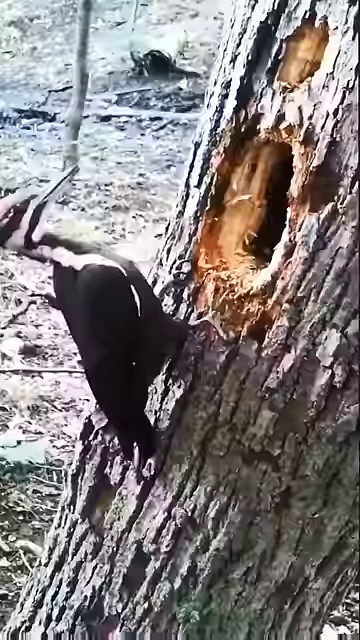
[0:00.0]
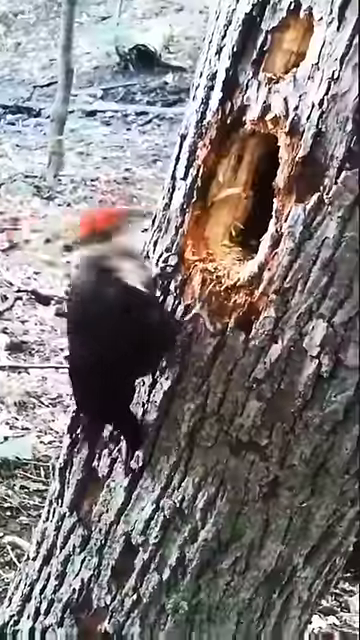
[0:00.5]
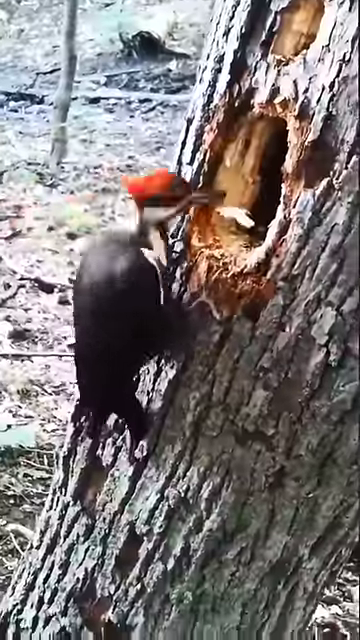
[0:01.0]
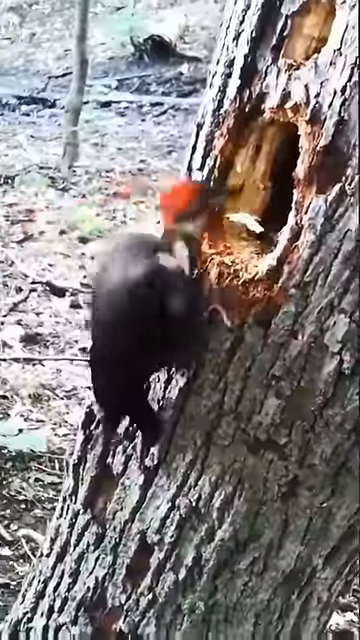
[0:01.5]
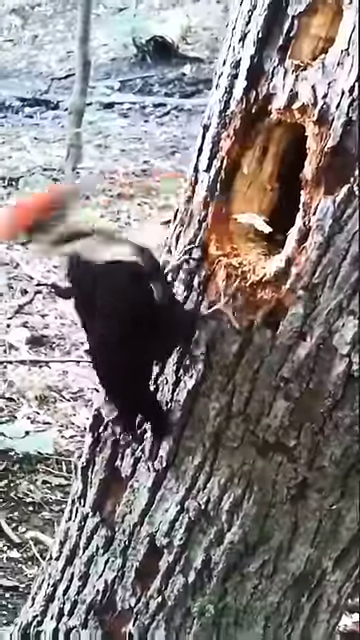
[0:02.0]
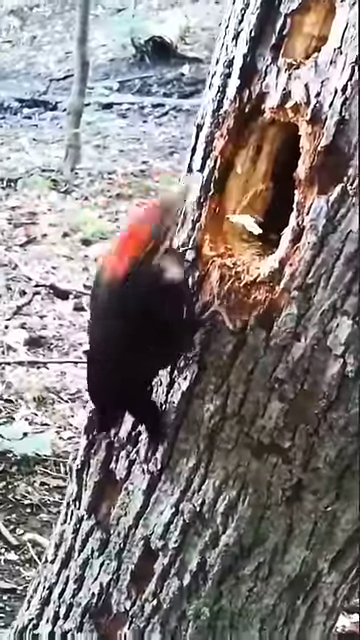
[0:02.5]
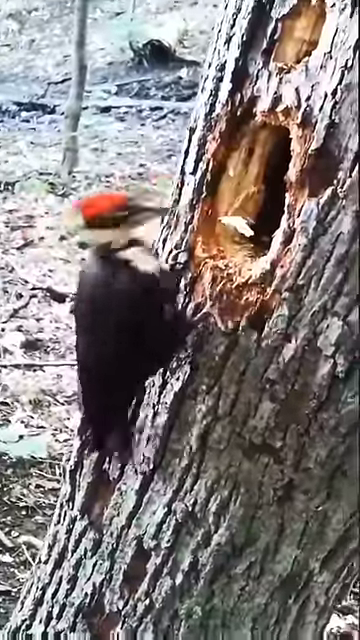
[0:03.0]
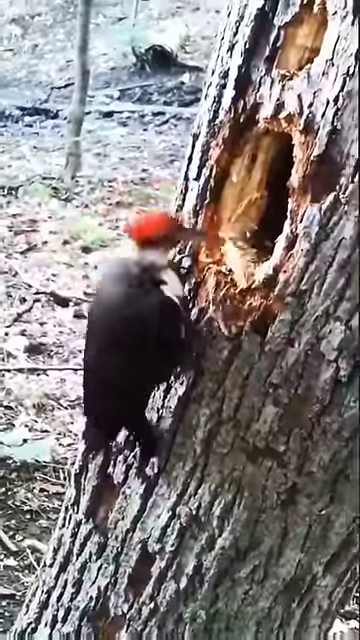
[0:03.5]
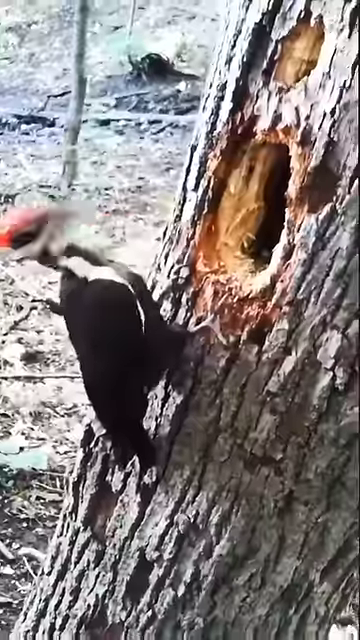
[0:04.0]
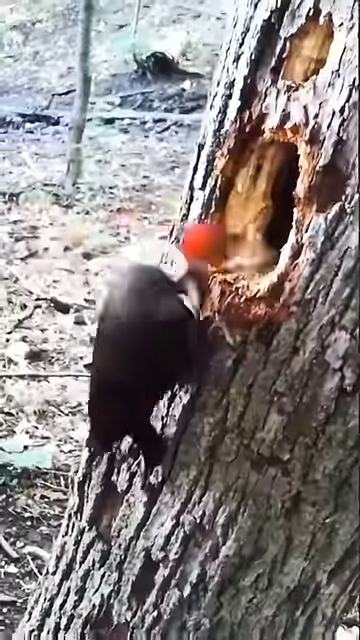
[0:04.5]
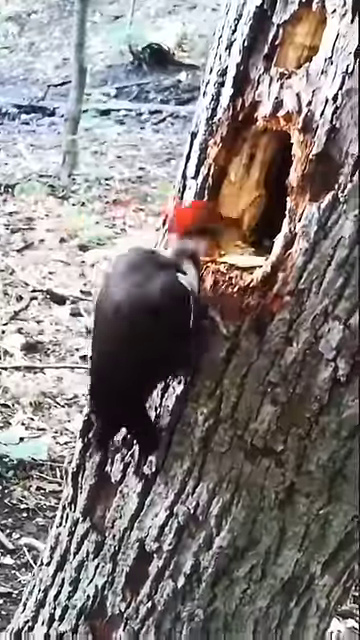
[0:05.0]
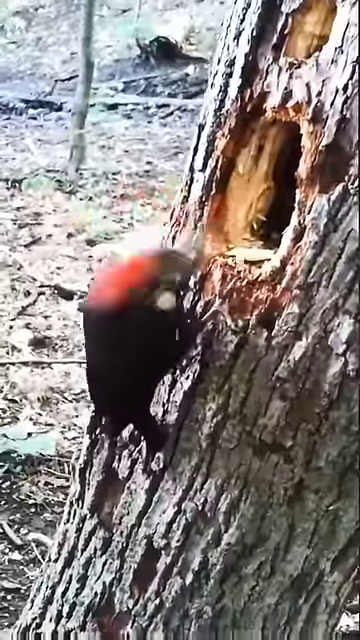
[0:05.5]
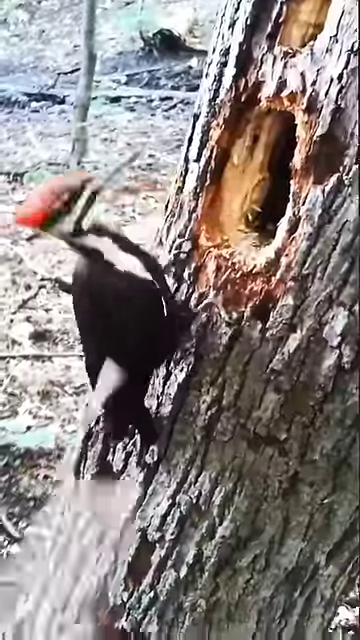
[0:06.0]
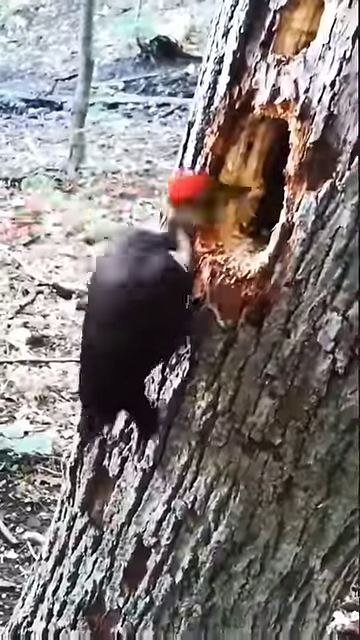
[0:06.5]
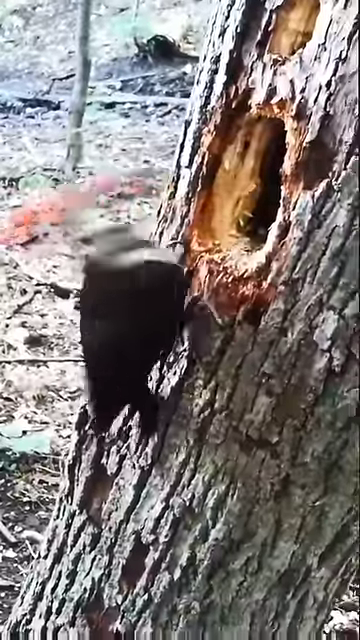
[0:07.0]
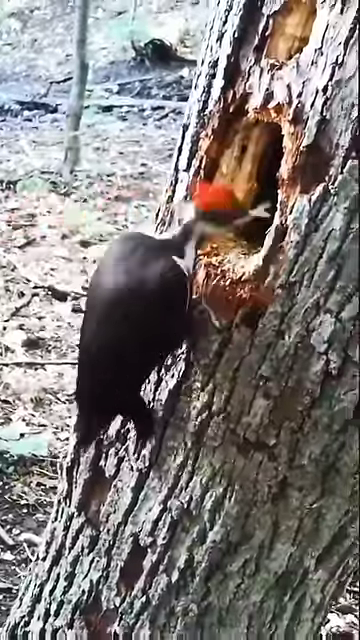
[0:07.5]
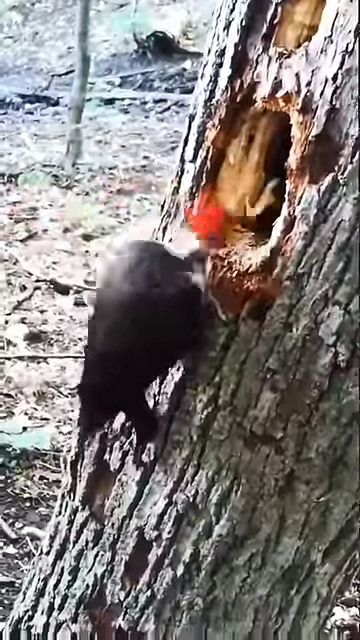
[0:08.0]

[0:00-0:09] A large picture shows an old, decaying tree with a large hole in it. Hanging on the side of the dying tree is a large black woodpecker with a bright red head. The woodpecker pecks at the tree and tears it apart, driving its beak into the wood and pulling large chunks of wood and bark off. It is apparently looking for some type of termites or ants that are probably living in the decayed tree. In the background there is some grass and other trees that also do not look to be in very good shape. The woodpecker seems to be quite large for a woodpecker, and its head is a very colorful bright red.